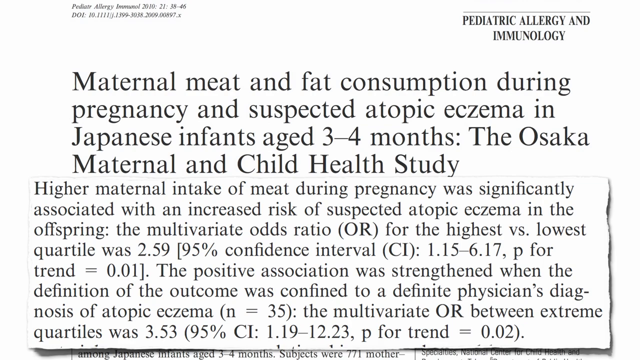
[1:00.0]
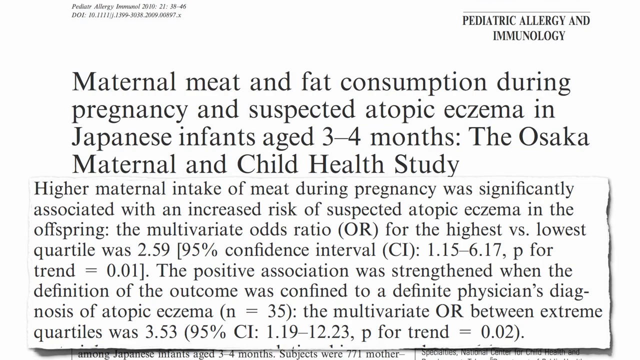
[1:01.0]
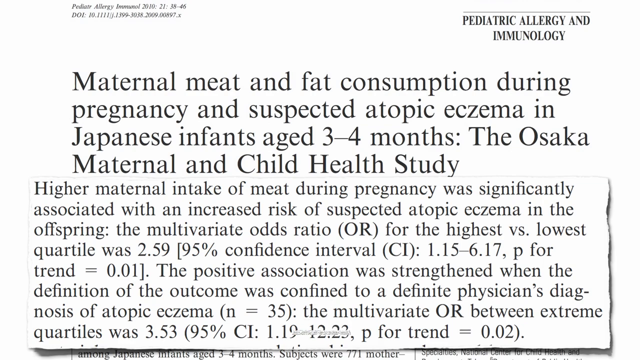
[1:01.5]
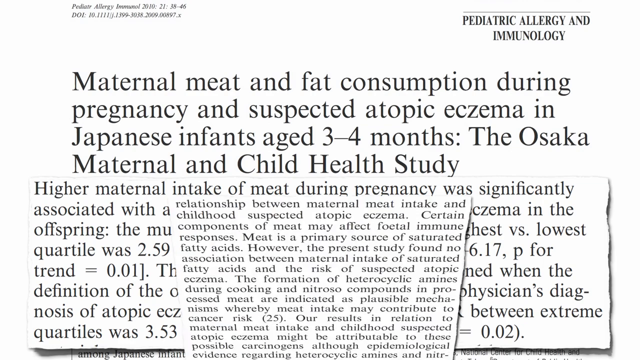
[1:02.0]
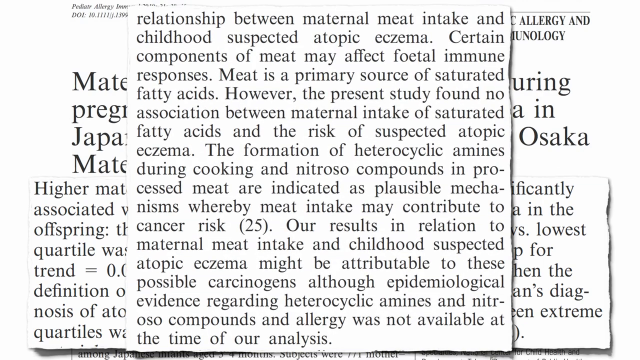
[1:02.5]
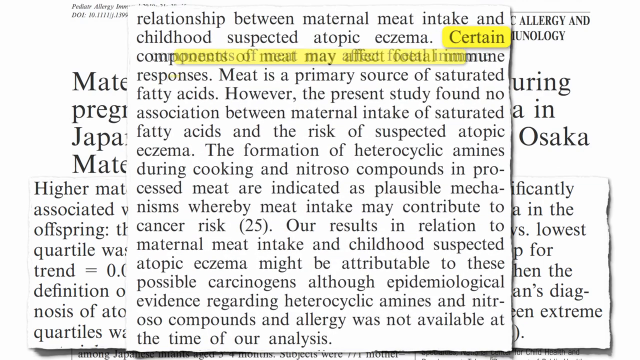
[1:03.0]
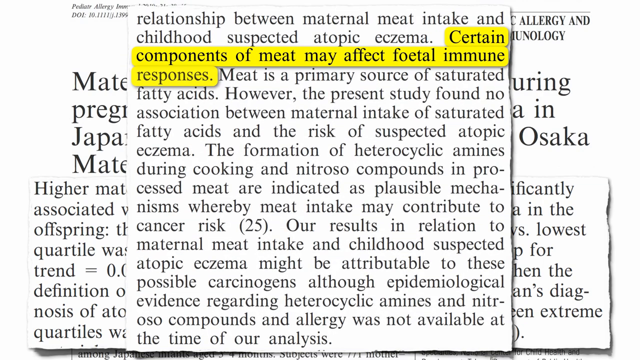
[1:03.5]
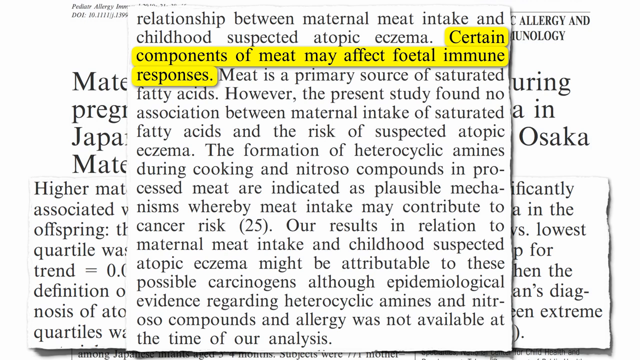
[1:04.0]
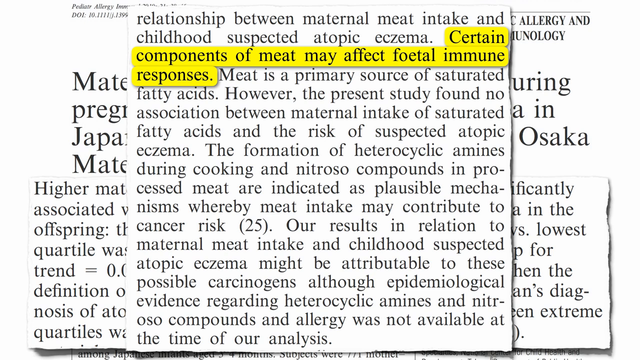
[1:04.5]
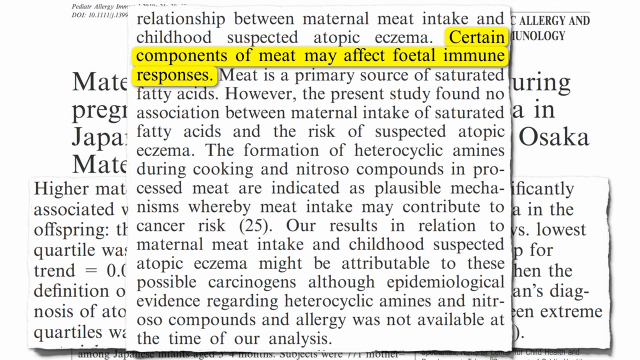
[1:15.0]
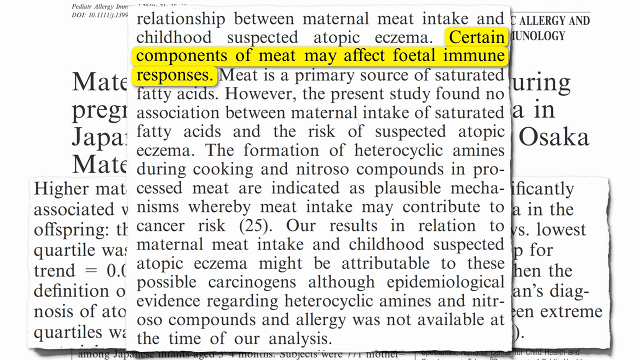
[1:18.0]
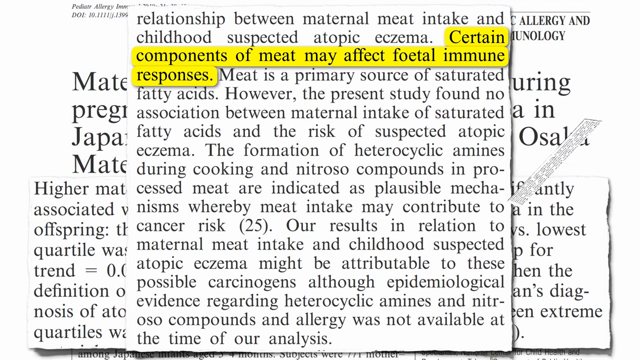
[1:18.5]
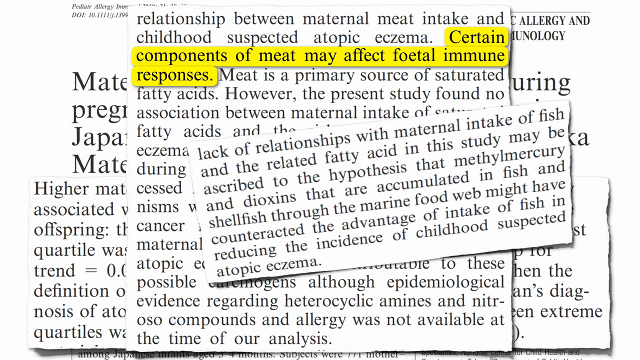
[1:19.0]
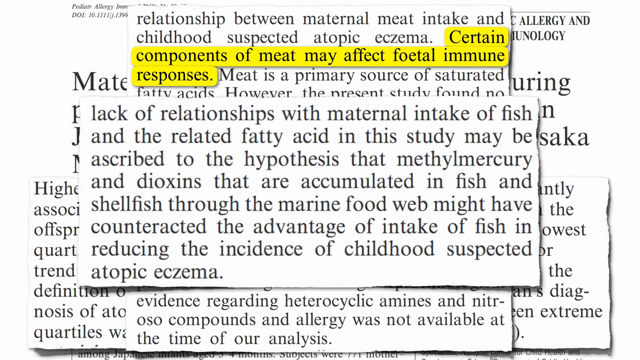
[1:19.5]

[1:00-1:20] The top of an academic report in the style of a journal article is shown. In the top left-hand corner, in tiny italic lettering, are details of the journal itself, and on the right-hand side, in capitals, is "paediatric allergy and immunology." The main heading reads "maternal meat and fat consumption during pregnancy and suspected atopic eczema in Japanese infants aged three to four months, the Osaka Maternal and Child Health Study." The article begins below in a standard Times New Roman font, black lettering on a white background. A pop-up box then shows an extract from the article with a sentence highlighted in yellow, beginning "certain components of meat may affect." Later, a third pop-up window appears with another, shorter extract, superimposed on top of the other two pages, reading "lack of relationships with maternal intake of fish and the related fatty acid in this study may be ascribed to the hypothesis."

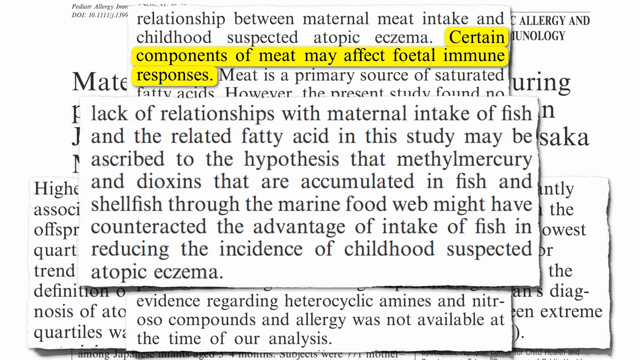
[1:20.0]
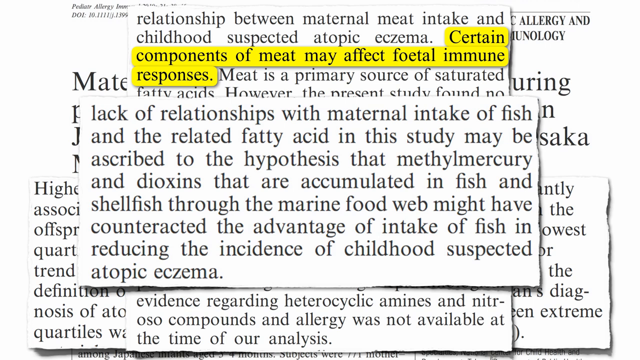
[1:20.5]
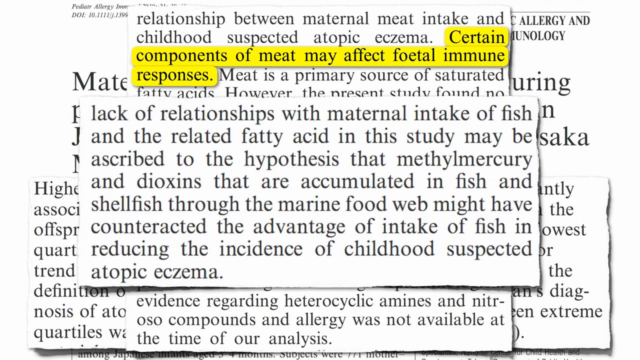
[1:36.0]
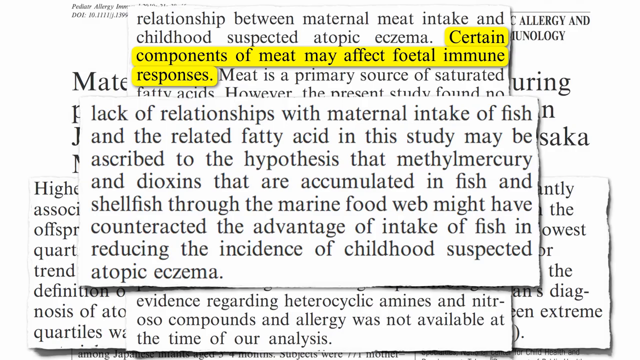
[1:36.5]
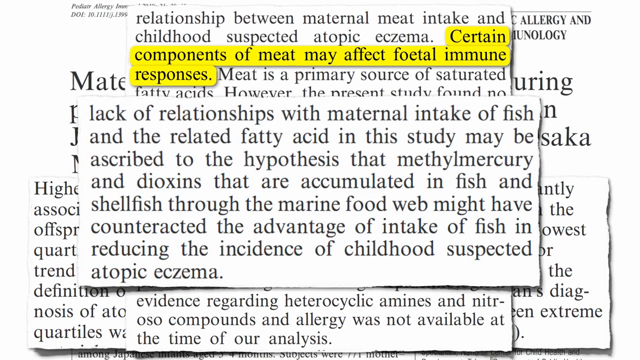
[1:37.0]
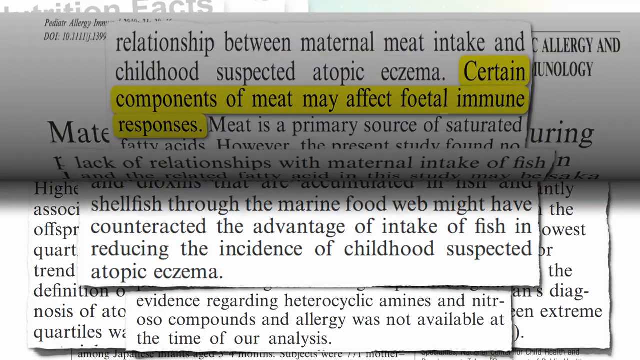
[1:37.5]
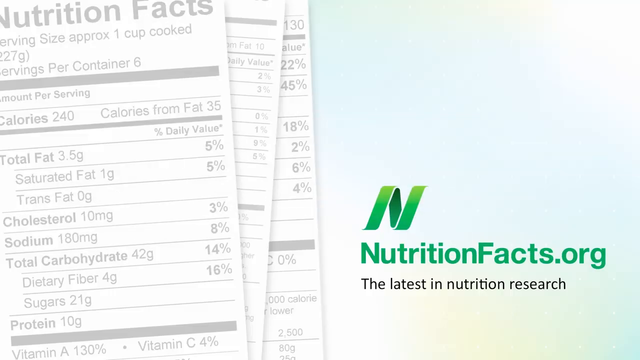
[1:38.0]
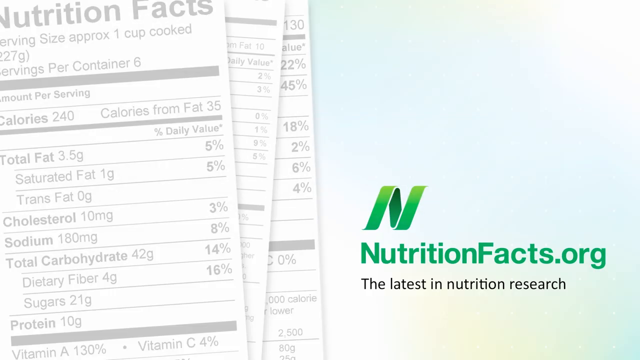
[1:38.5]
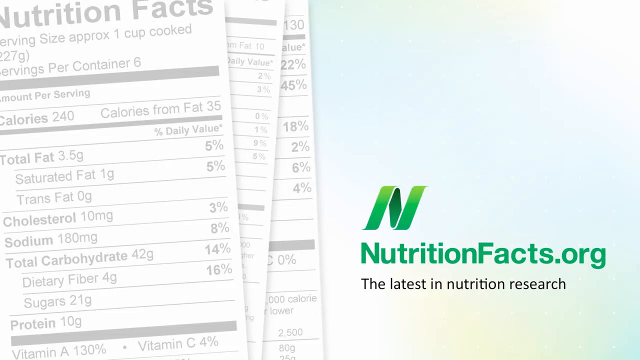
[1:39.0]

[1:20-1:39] Layered images taken from a journal fill the screen: five different extracts in pop-up windows, one over the other, all with black lettering on a white background in a standard Times New Roman style. Vague shadowing around the corners of the extracts makes them look like pieces of ripped paper from the report. The top one is about the lack of relationships with maternal intake of fish and the related fatty acid in the study. The screen does not change for a while, and then a fold-down effect appears, with the page coming down like a book closing, shown very briefly. The last screen shows the first screen: a pale blue background with the company branding in the right-hand corner, consisting of a cartoon letter N made of a piece of tape, then nutritionfacts.org in green lettering, and underneath that "the latest in nutrition research" in black lettering. On the left-hand side of the screen are three pieces of paper as a faded image reading "nutrition facts" with a breakdown of nutrition statistics.